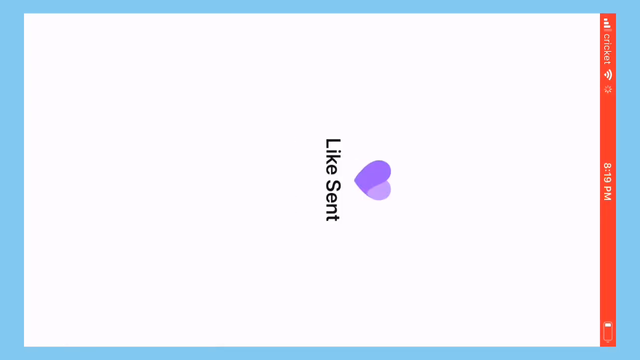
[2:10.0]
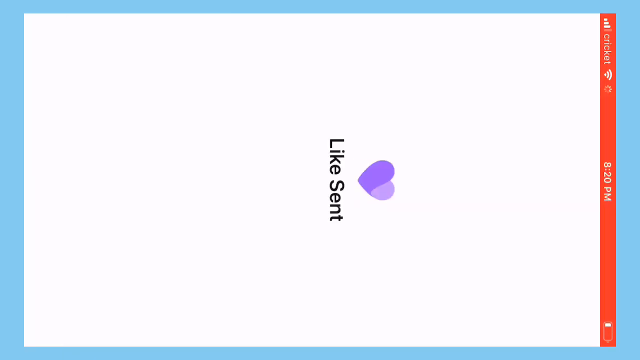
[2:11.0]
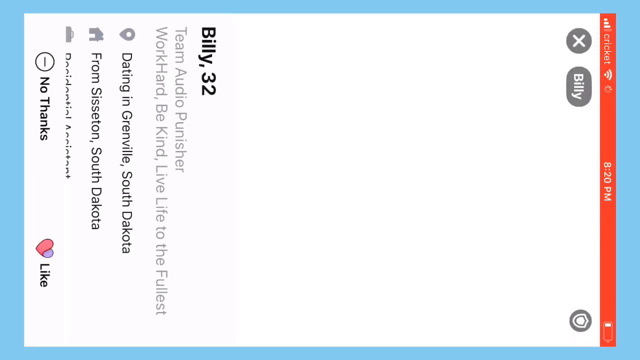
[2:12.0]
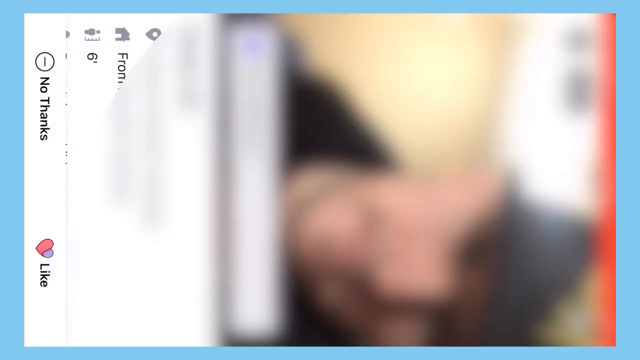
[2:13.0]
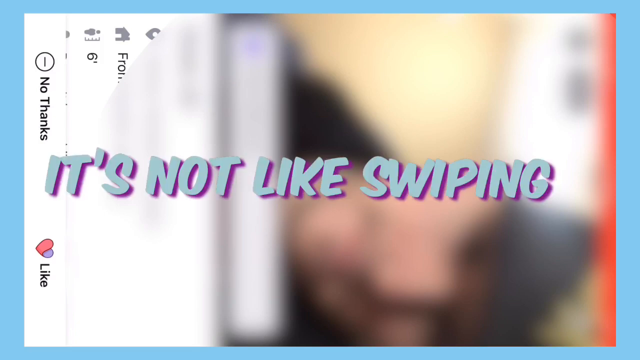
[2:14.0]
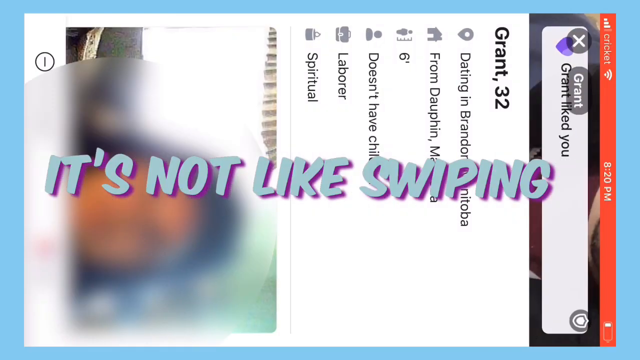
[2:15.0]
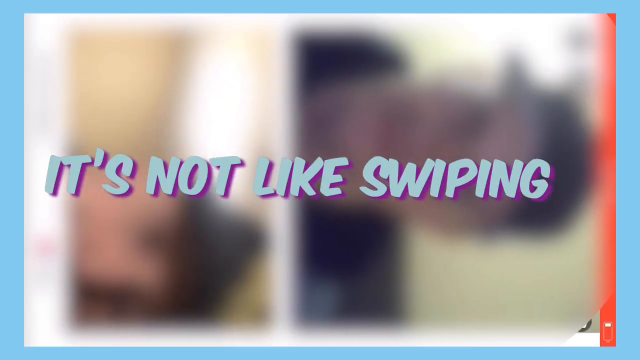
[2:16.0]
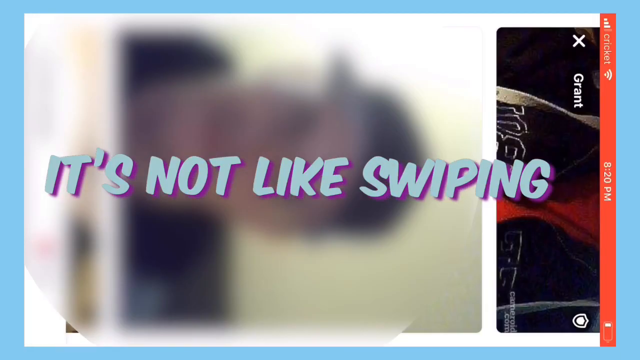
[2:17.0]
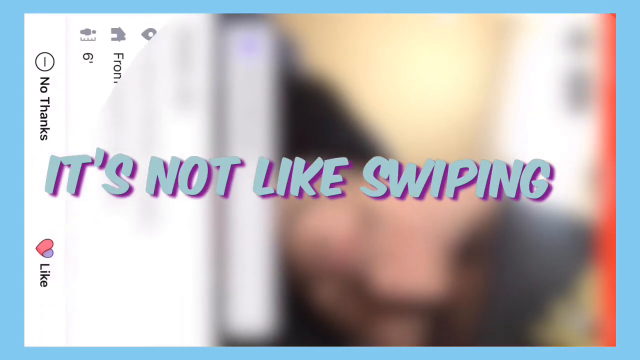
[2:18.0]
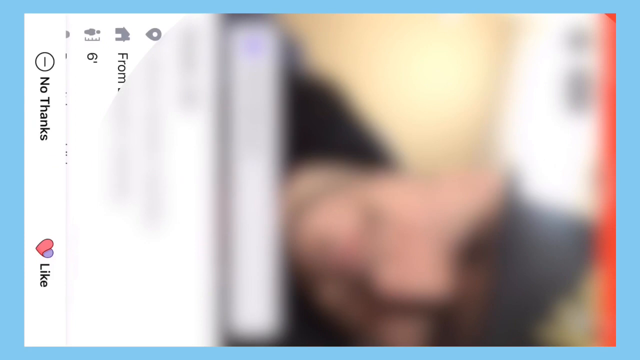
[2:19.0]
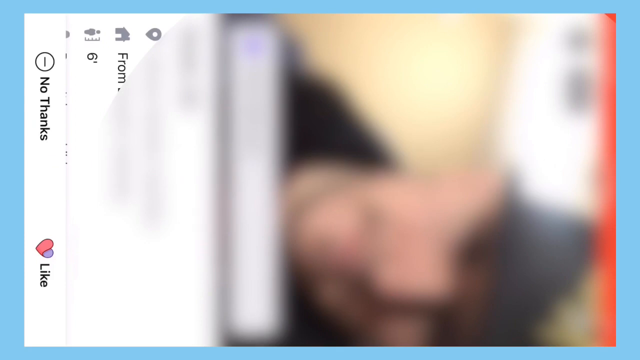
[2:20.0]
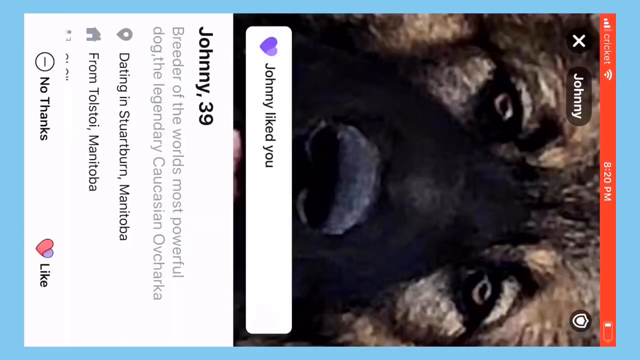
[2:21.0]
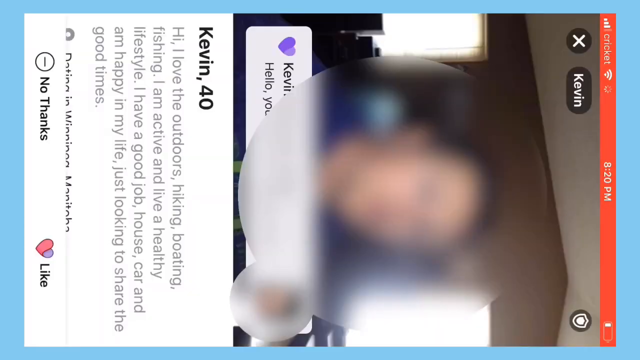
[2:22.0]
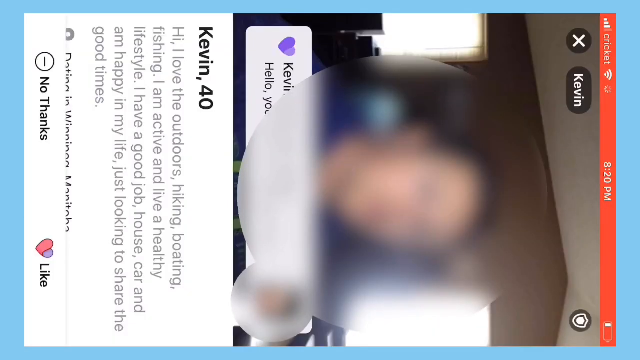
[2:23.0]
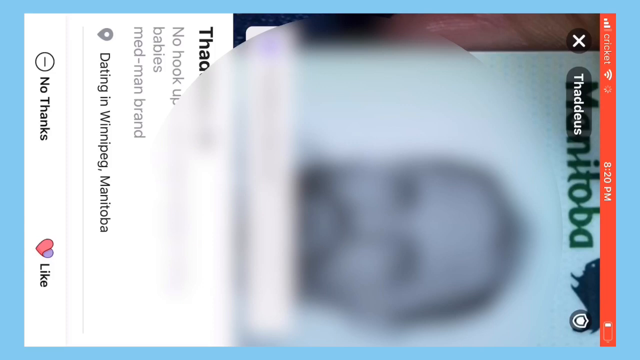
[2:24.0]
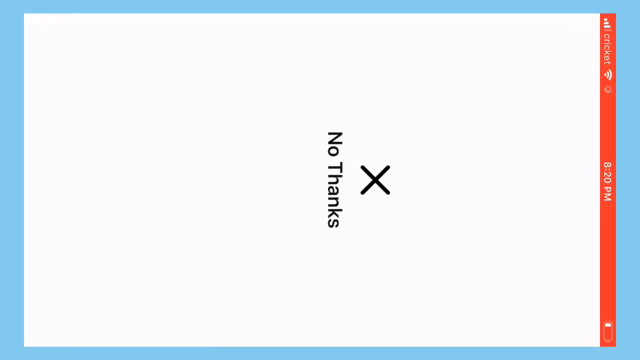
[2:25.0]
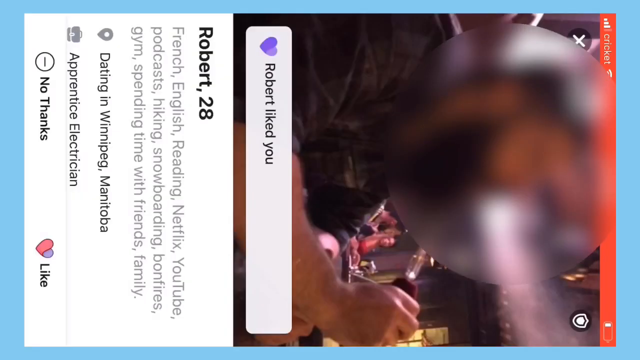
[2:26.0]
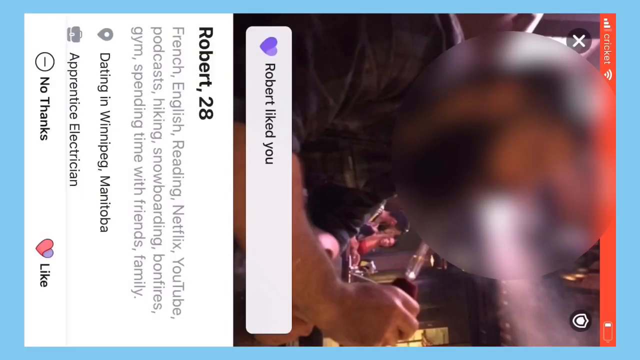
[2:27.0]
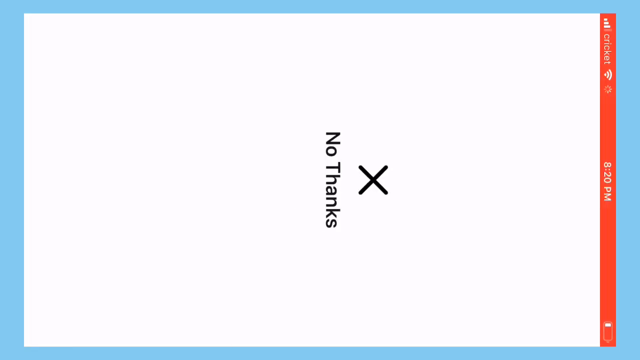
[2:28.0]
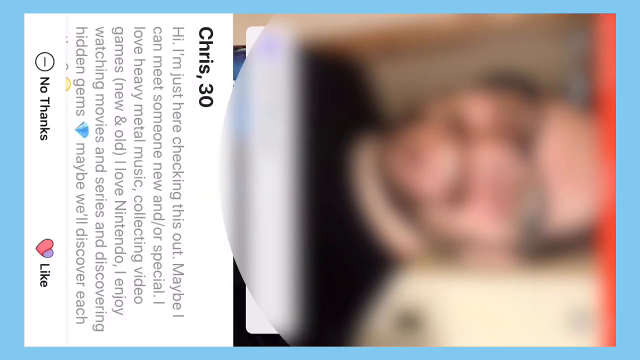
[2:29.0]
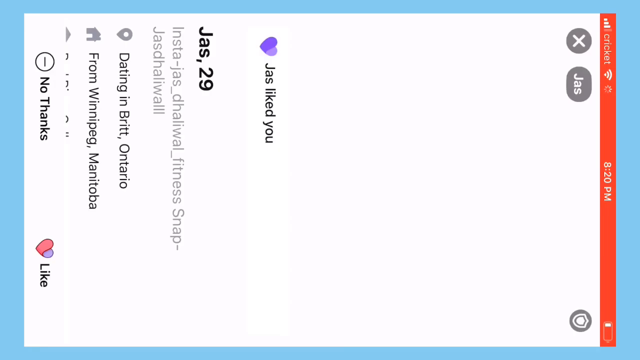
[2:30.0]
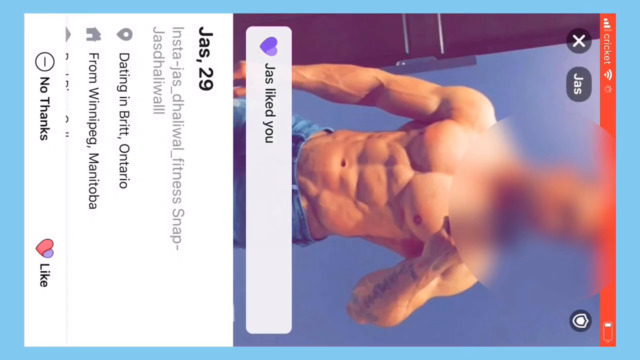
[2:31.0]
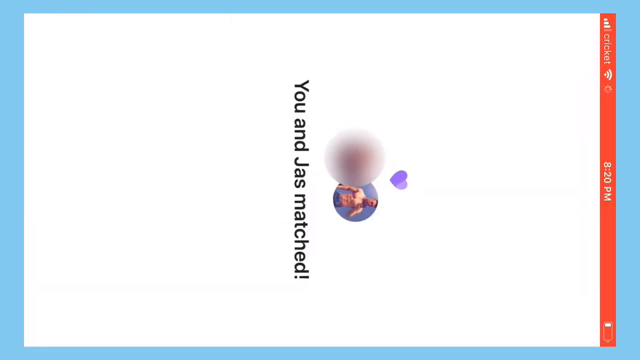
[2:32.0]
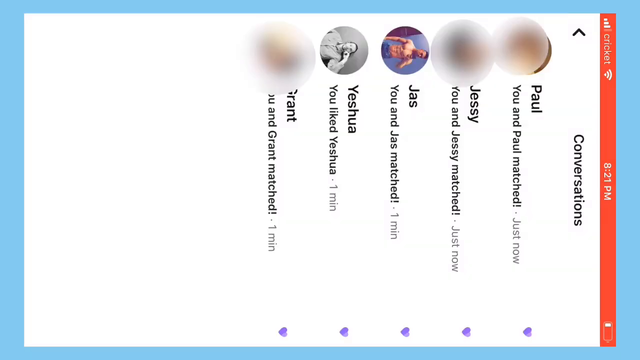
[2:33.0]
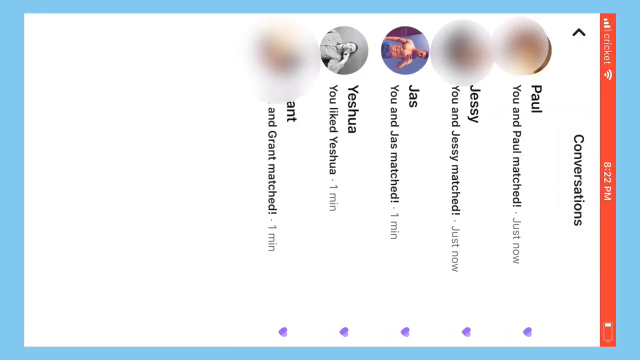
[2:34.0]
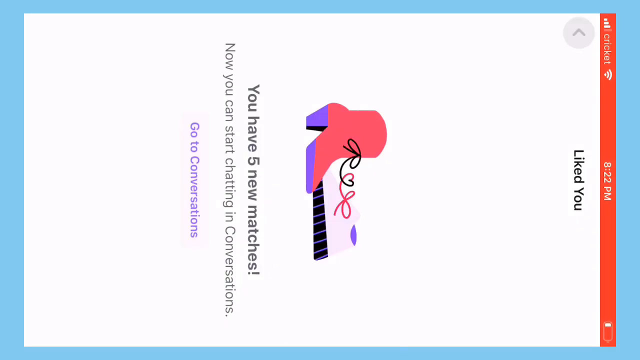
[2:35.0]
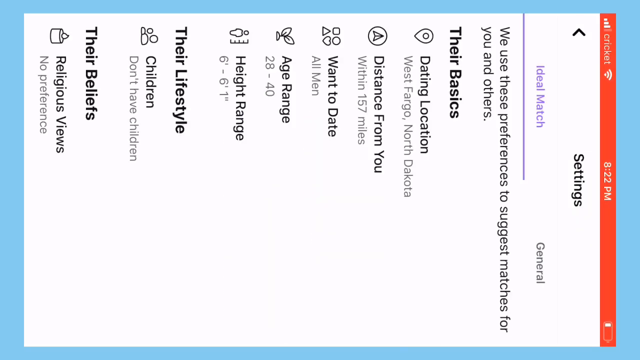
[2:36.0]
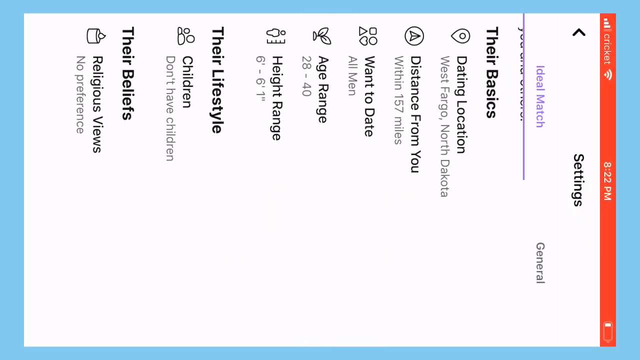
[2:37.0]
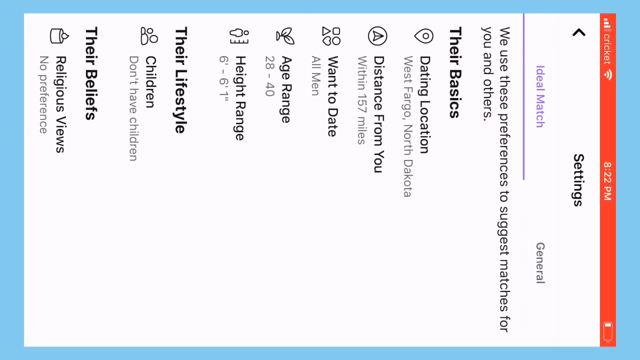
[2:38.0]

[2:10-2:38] A single white screen shows what looks to be a phone screen recording, made in portrait mode and turned sideways so the top is on the right side of the video. The screen is white with a purple heart in the center and text underneath reading "Like Scent." It cuts to a social media profile that seems to be a dating profile, with the photo blurred out, and then "Like Scent" appears. It moves to a new person and rapidly shows "Like Scent," then to a different person, who is also liked, and text appears reading "It's not like swiping." On another man's profile a button is hit, and "no thanks" immediately appears in the center of the screen. This is repeated across various profiles.